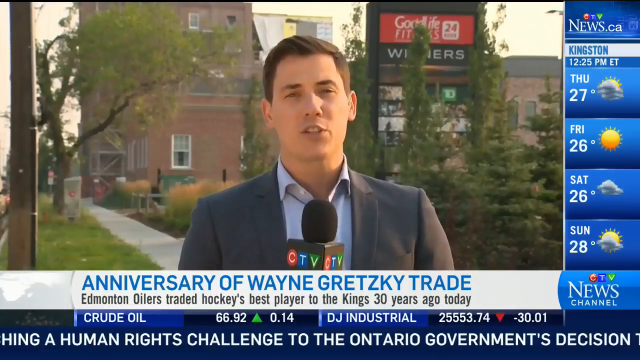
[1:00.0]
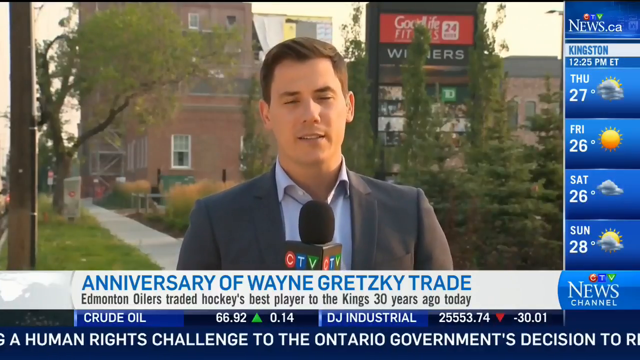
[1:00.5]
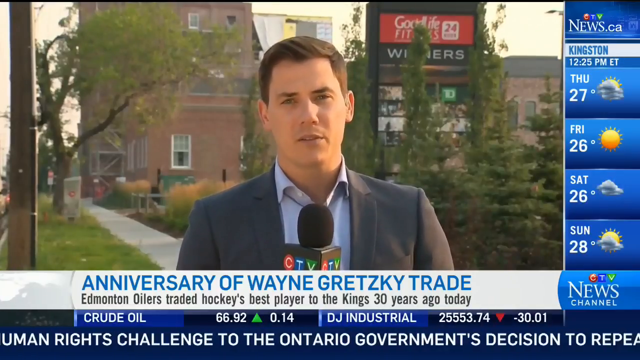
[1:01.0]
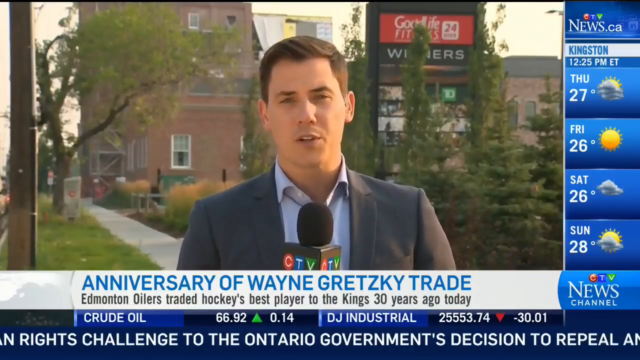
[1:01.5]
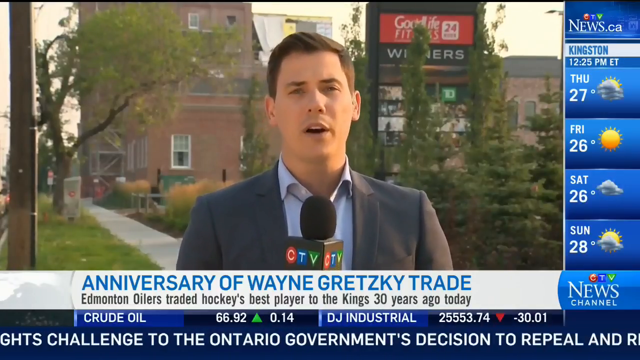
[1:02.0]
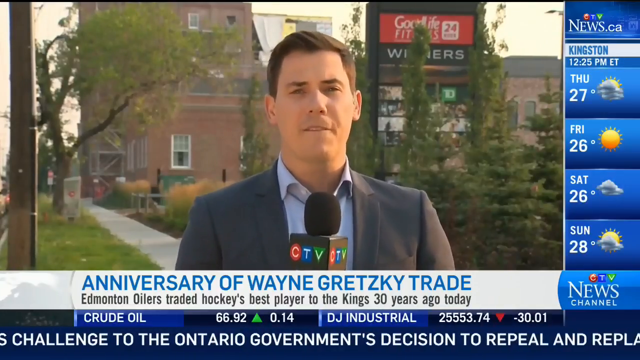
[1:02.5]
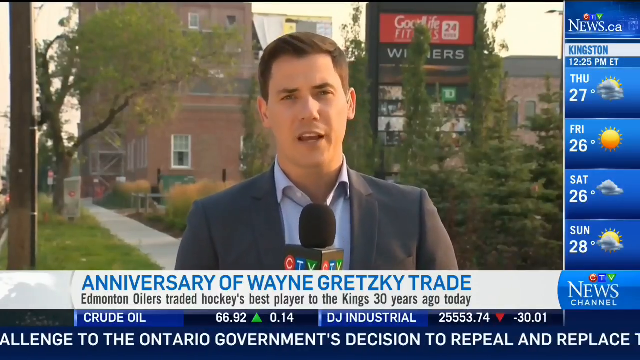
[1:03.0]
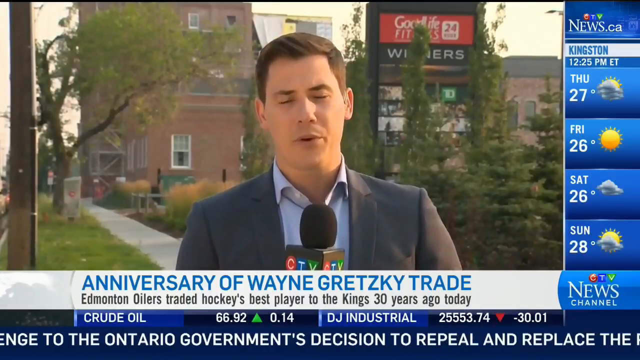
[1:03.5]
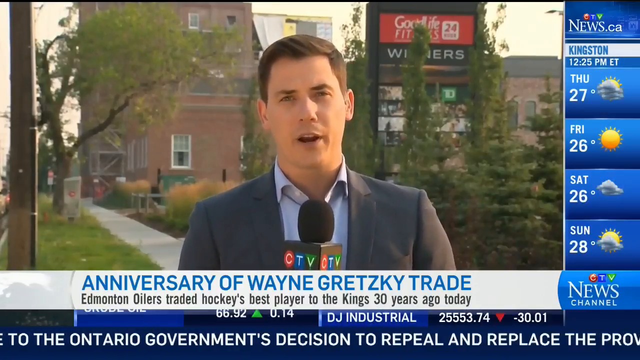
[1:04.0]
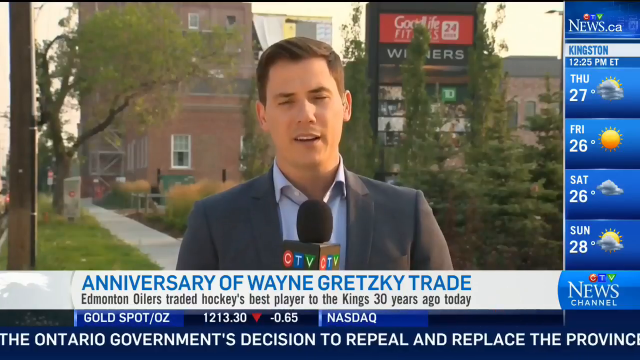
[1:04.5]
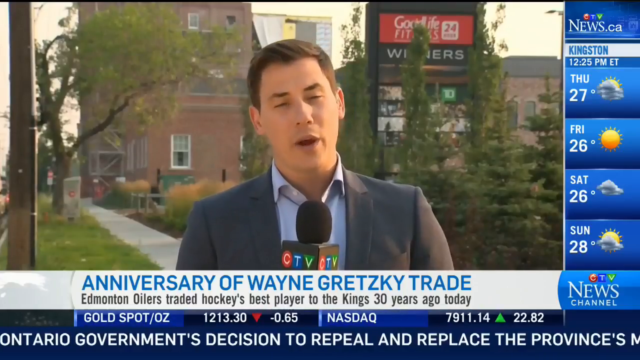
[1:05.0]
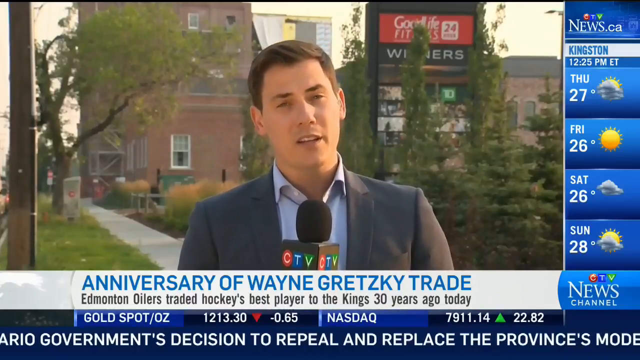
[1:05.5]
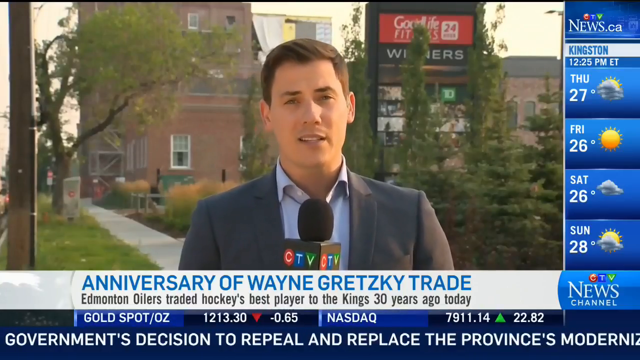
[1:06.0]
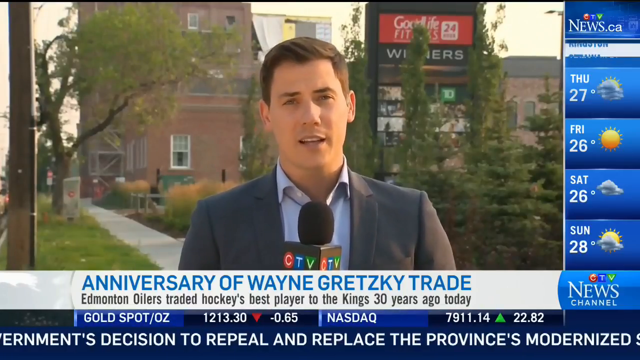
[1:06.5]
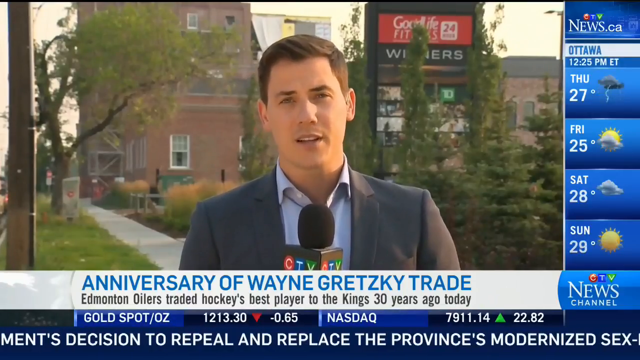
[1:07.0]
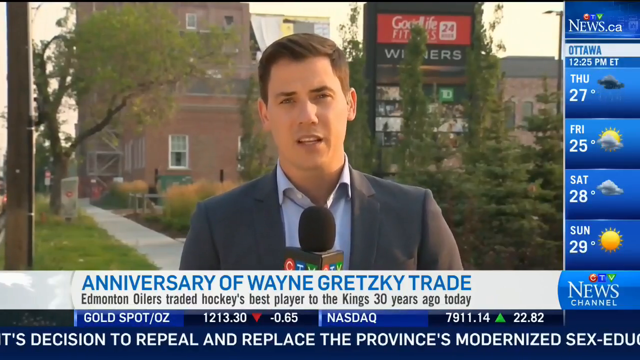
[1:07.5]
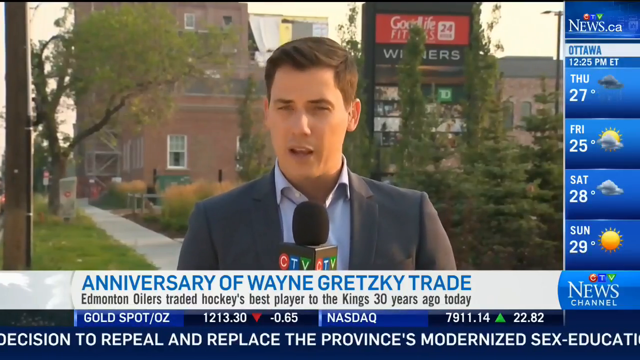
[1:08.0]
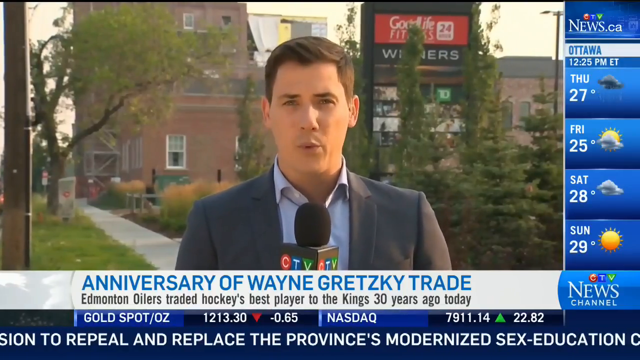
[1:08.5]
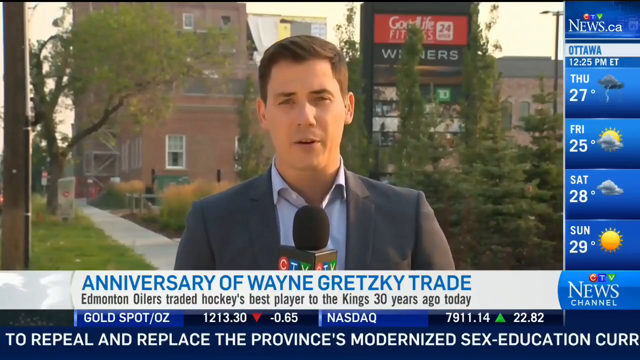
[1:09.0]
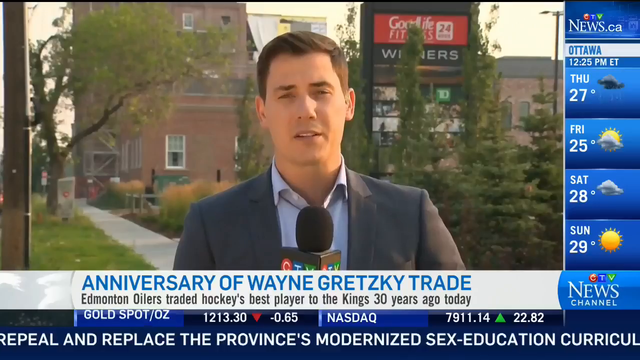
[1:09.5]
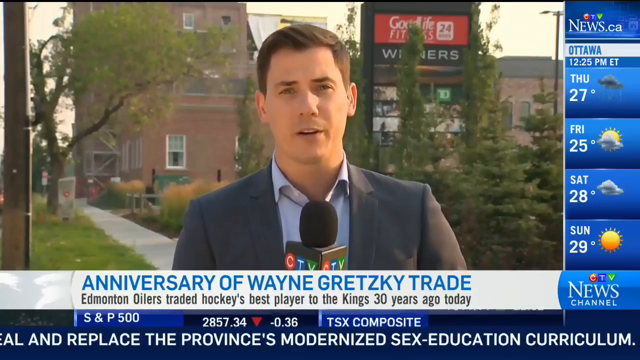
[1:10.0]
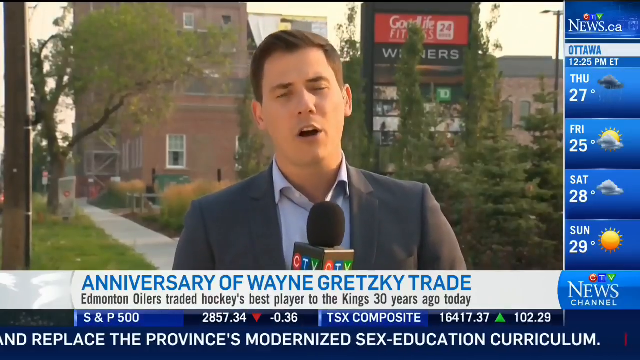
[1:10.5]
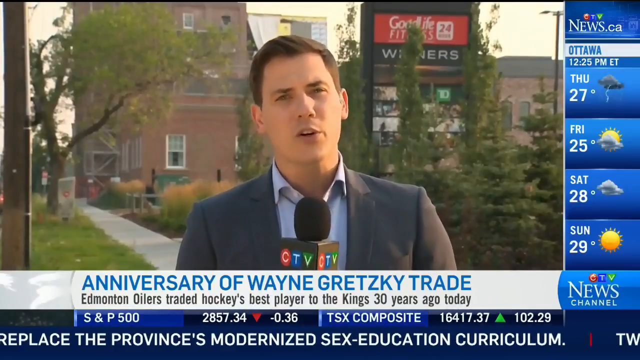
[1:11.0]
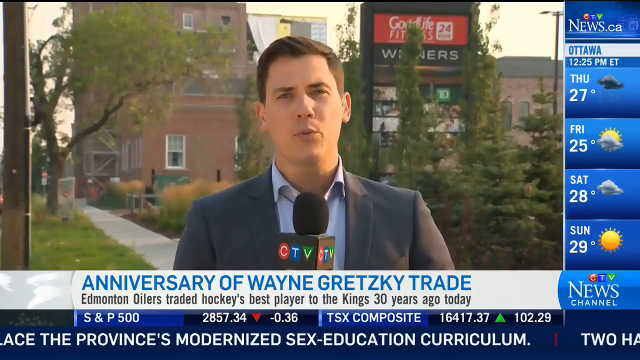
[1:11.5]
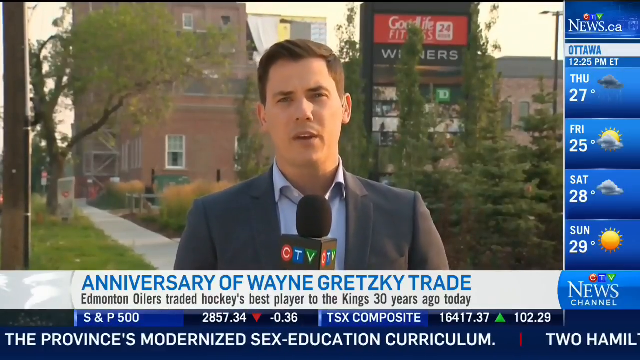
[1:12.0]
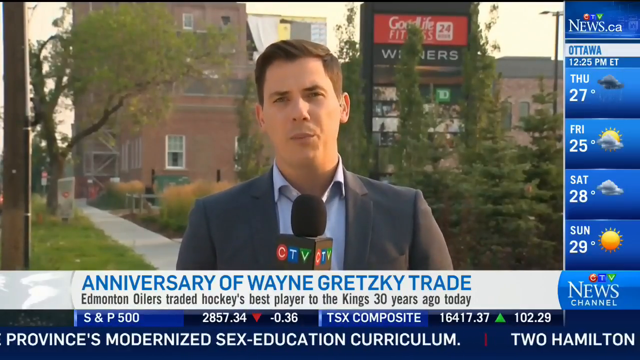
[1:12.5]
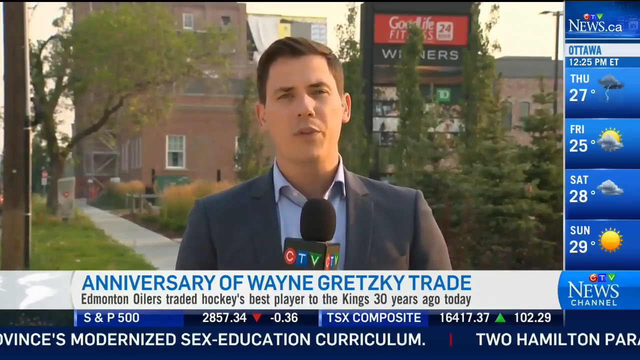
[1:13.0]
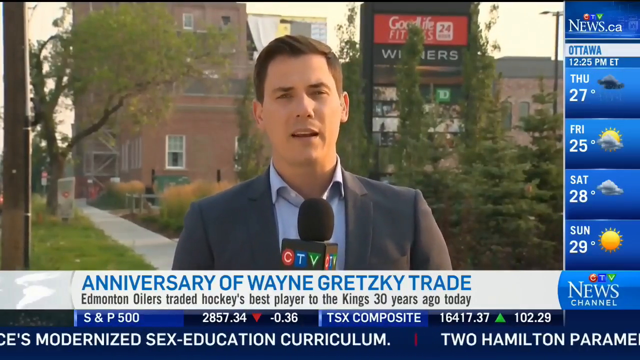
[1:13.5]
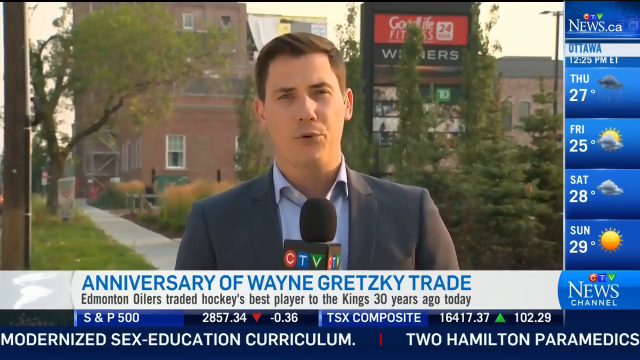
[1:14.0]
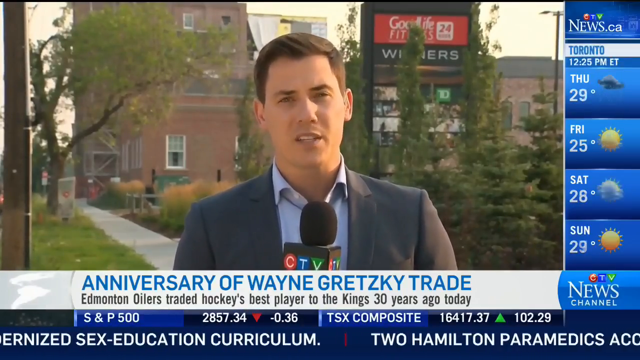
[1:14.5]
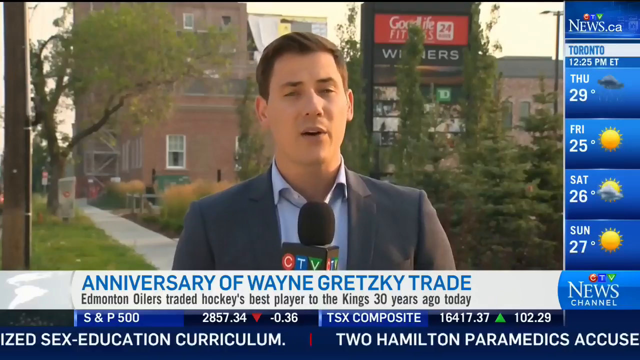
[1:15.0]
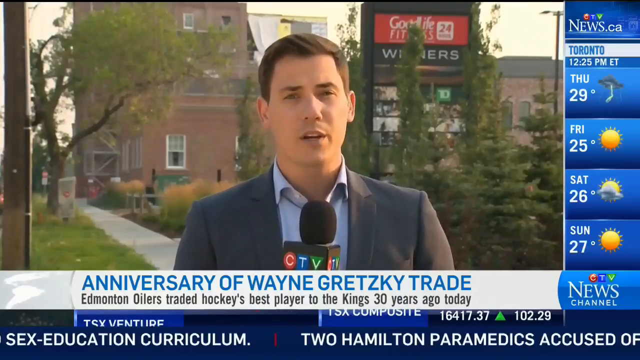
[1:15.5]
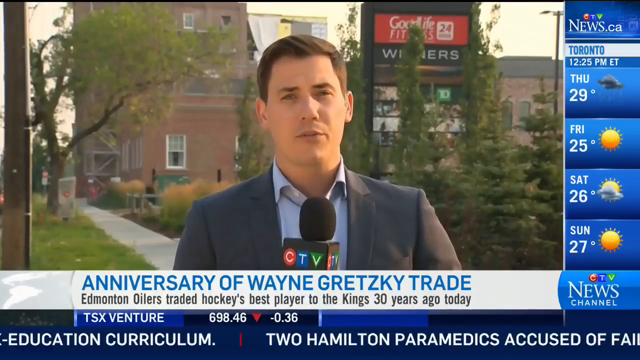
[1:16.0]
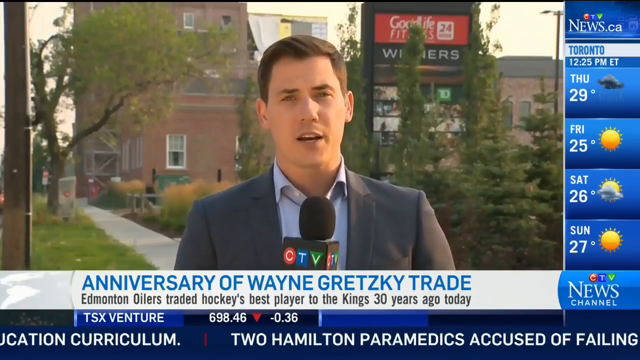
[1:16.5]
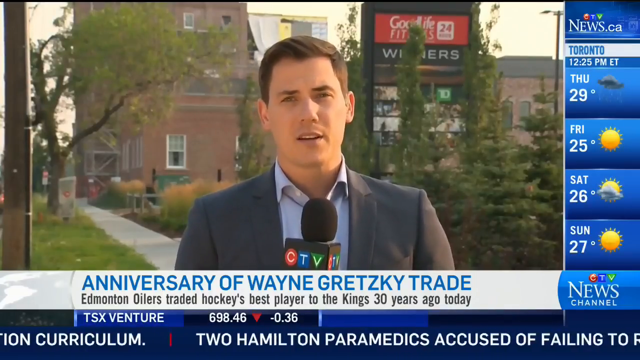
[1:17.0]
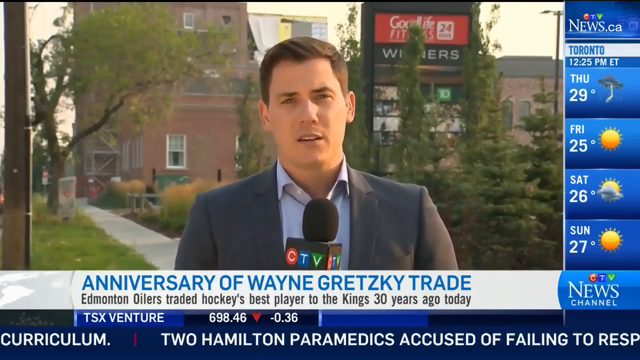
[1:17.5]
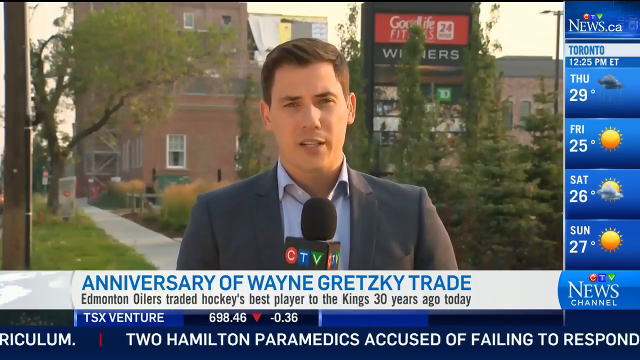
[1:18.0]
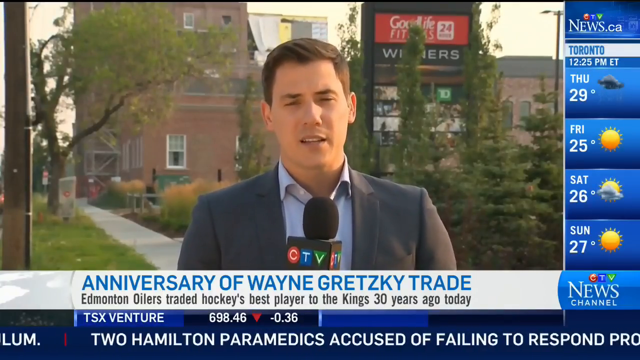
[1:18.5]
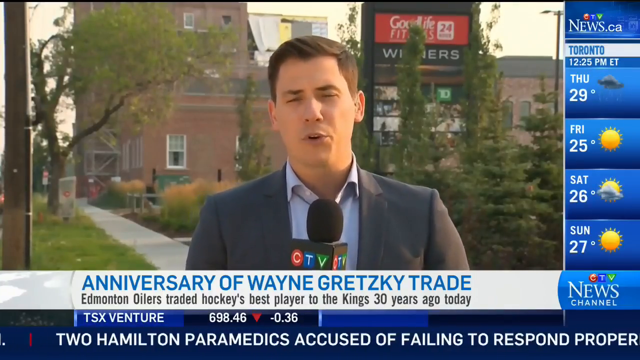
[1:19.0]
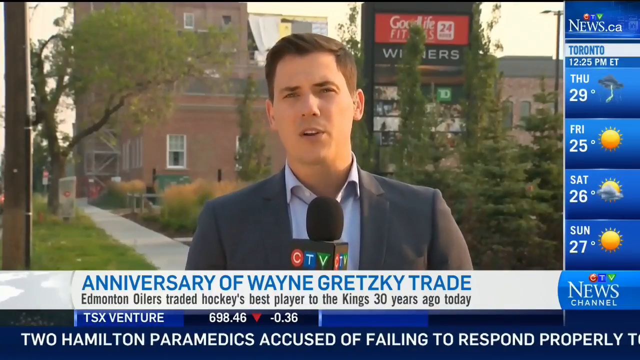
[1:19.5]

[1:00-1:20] At the bottom of the screen, text reads "the anniversary of Wayne Gretzky" in blue, all caps, on a white background that curves down in a roughly semicircular shape. Beneath it, a ticker shows stock prices: crude oil with a green arrow pointing up, and DJ industrial with a red arrow, down by almost 30. Text at the bottom refers to Ontario's government's decision to repeal and replace. The correspondent keeps speaking; the sun shines on his right side and seems to bother him slightly. For the most part he uses no hand gestures and just talks matter-of-factly. Weather for Toronto is shown on the right. Below, "news.ca" appears for Canada, and above it, centered over the word news, "CTV" appears in red, blue, and green.